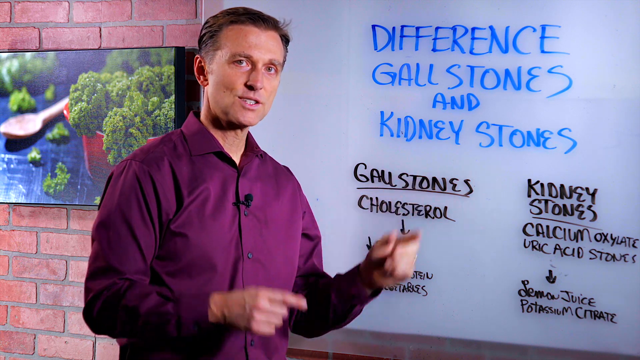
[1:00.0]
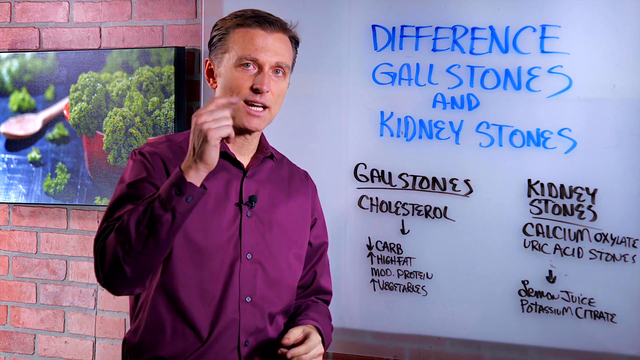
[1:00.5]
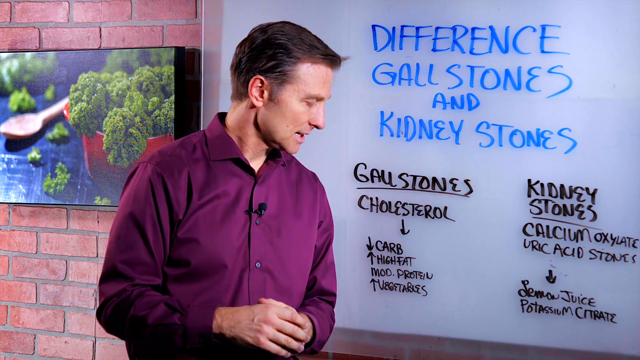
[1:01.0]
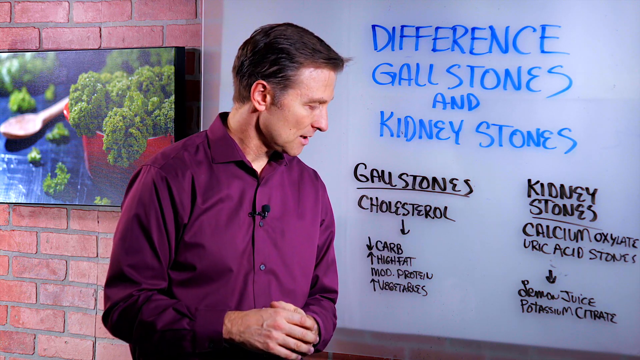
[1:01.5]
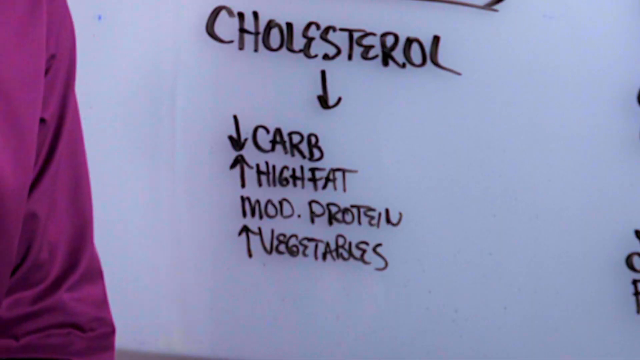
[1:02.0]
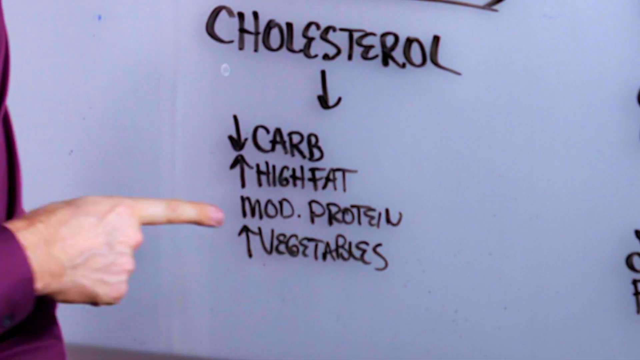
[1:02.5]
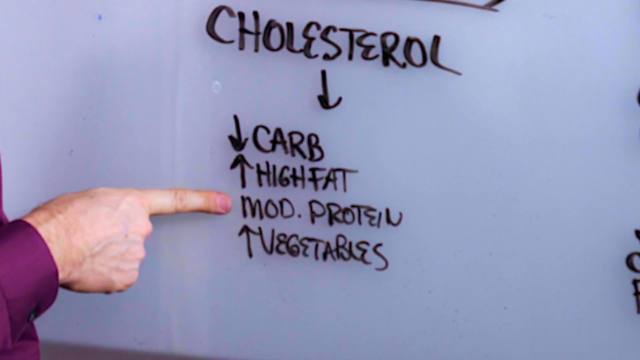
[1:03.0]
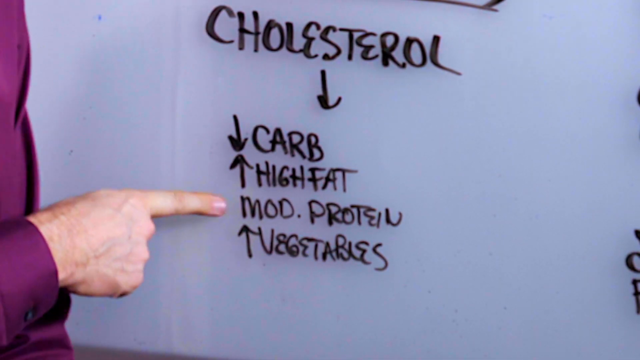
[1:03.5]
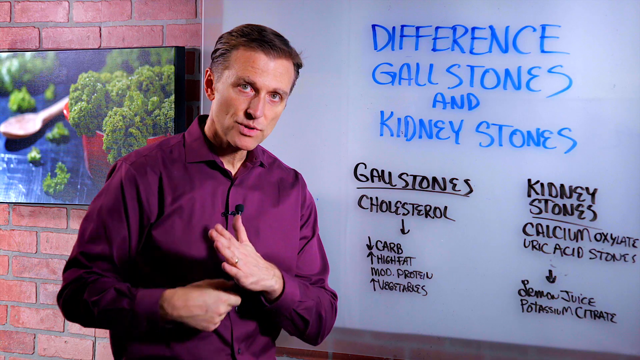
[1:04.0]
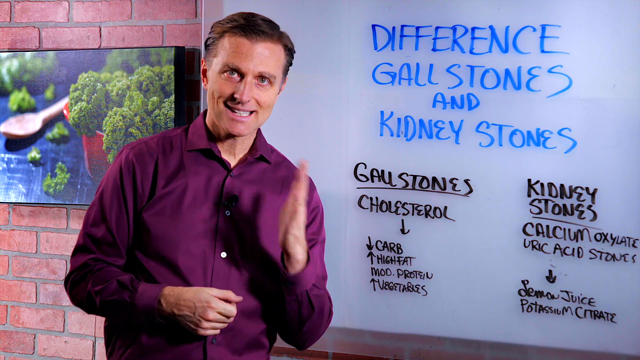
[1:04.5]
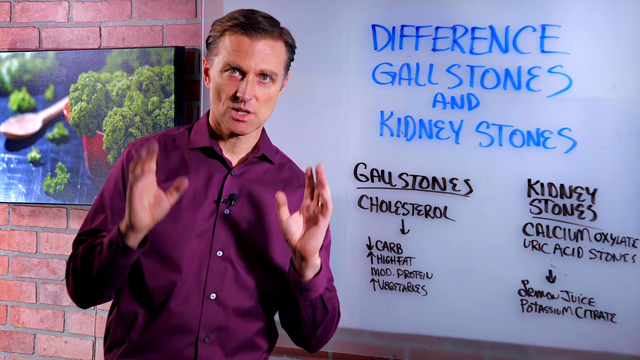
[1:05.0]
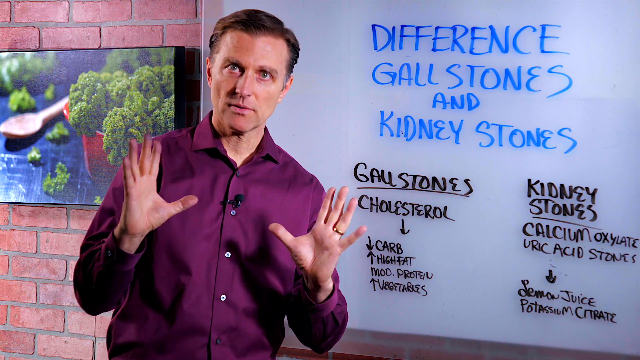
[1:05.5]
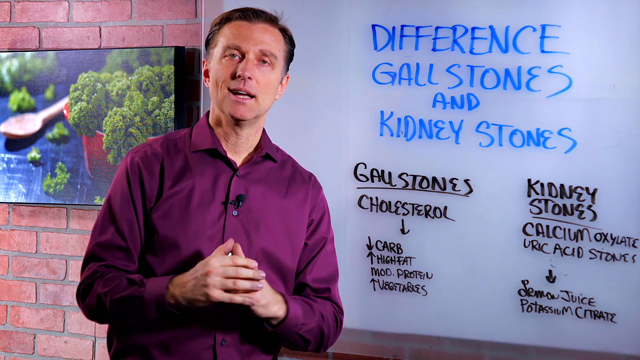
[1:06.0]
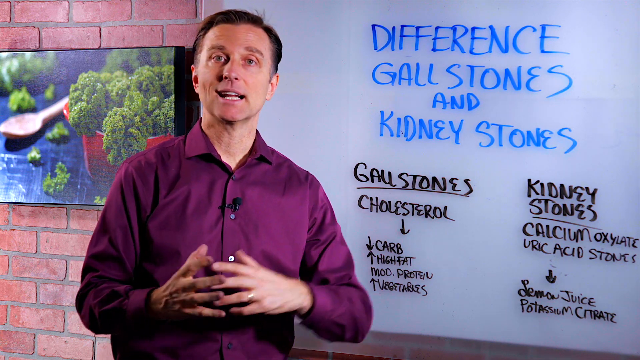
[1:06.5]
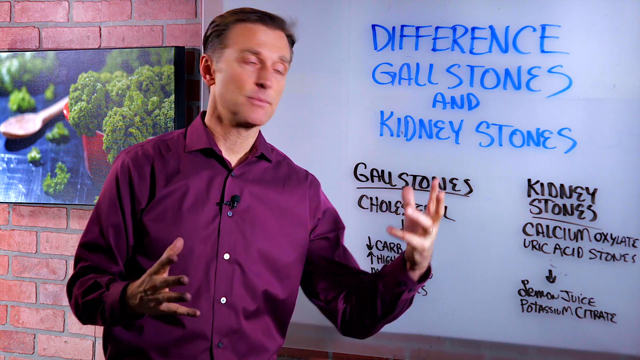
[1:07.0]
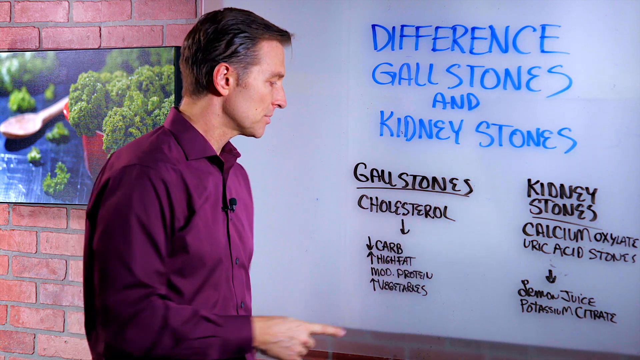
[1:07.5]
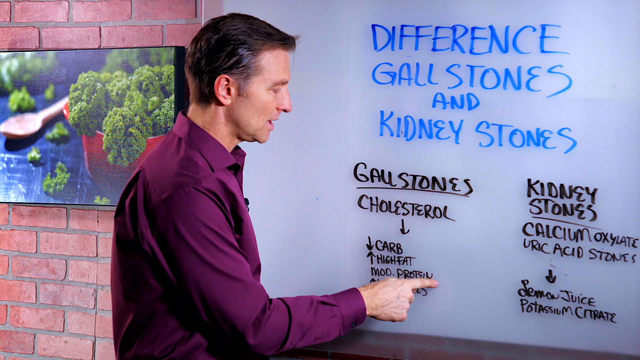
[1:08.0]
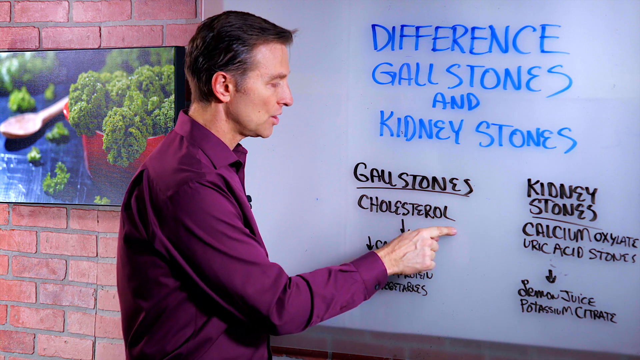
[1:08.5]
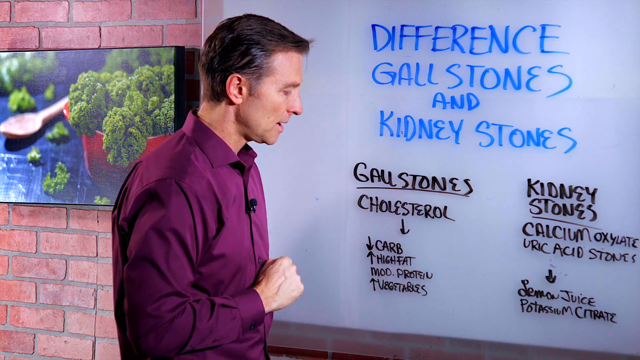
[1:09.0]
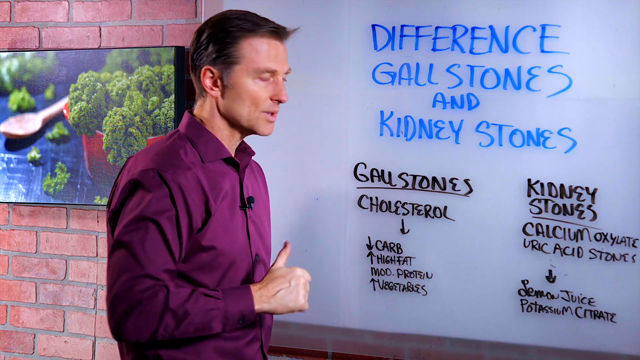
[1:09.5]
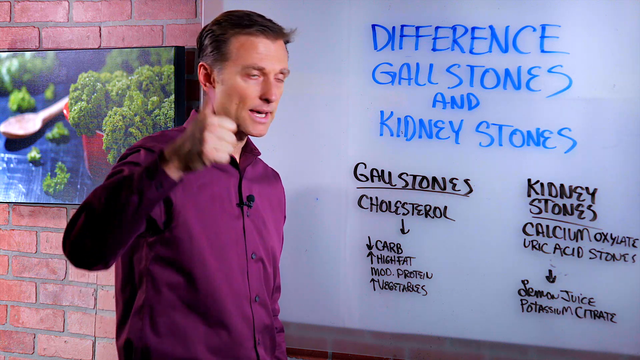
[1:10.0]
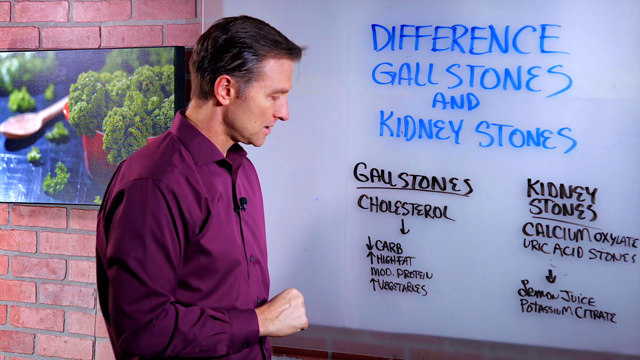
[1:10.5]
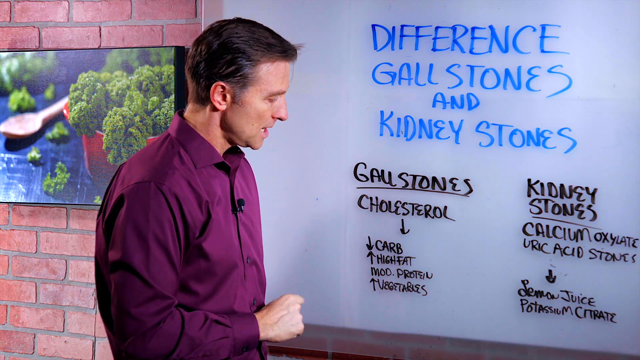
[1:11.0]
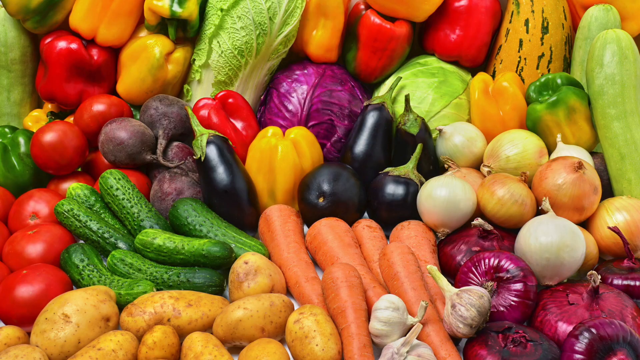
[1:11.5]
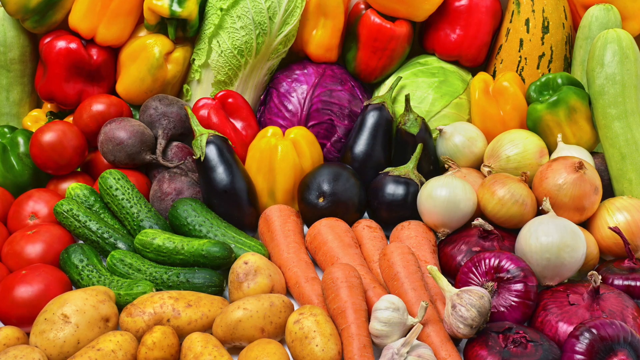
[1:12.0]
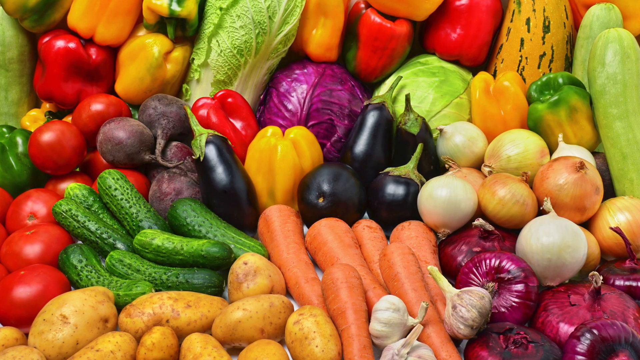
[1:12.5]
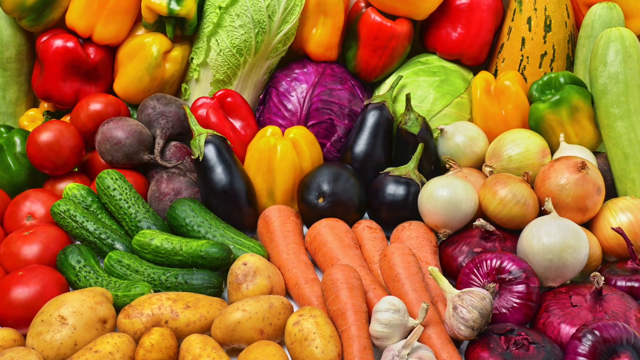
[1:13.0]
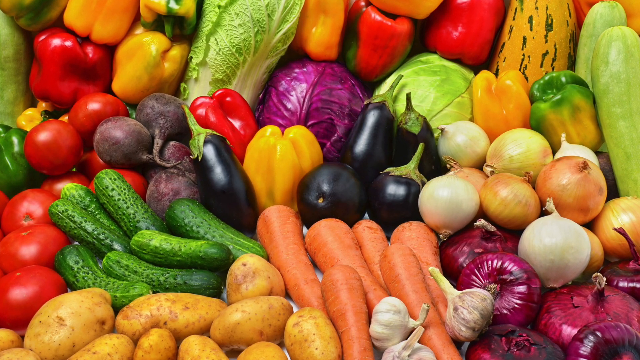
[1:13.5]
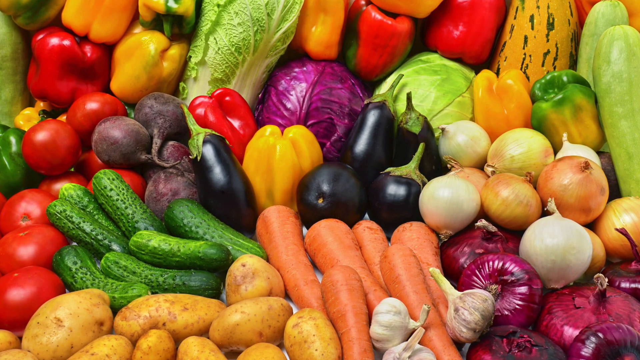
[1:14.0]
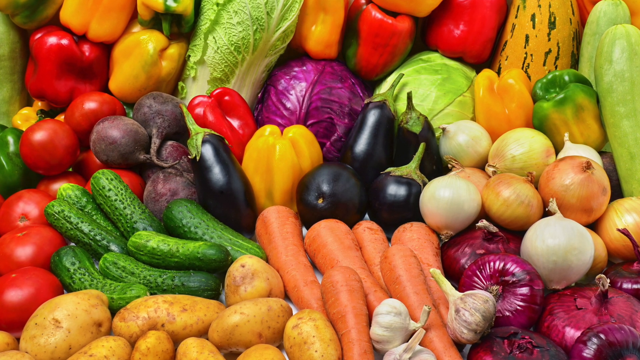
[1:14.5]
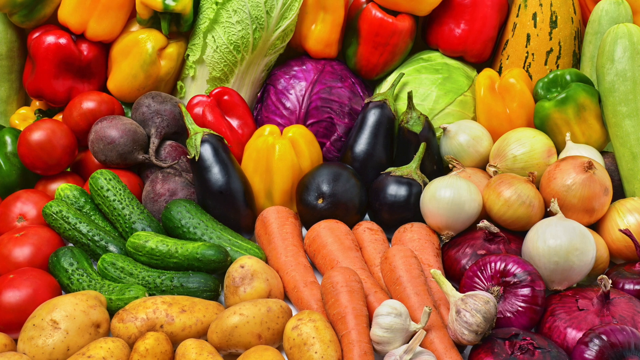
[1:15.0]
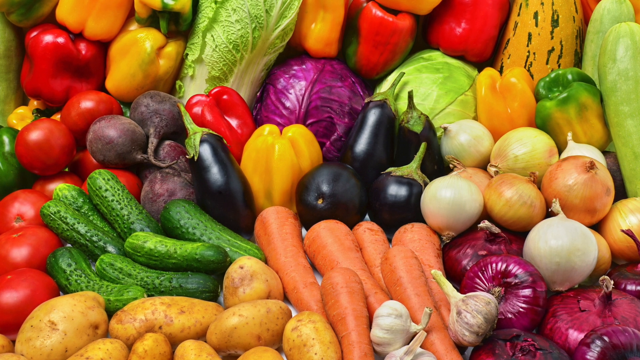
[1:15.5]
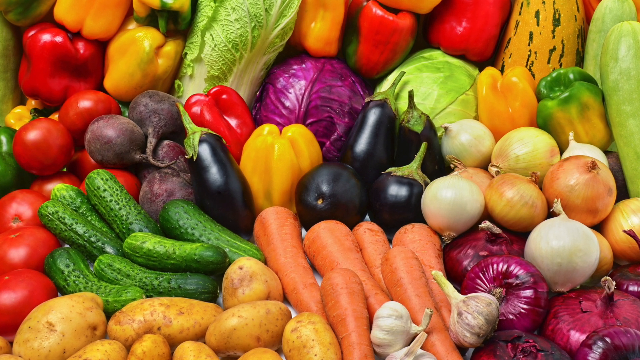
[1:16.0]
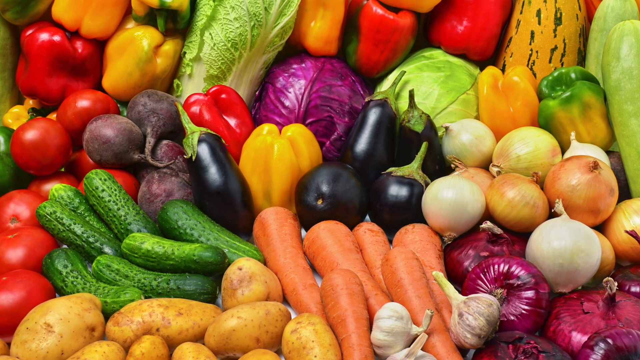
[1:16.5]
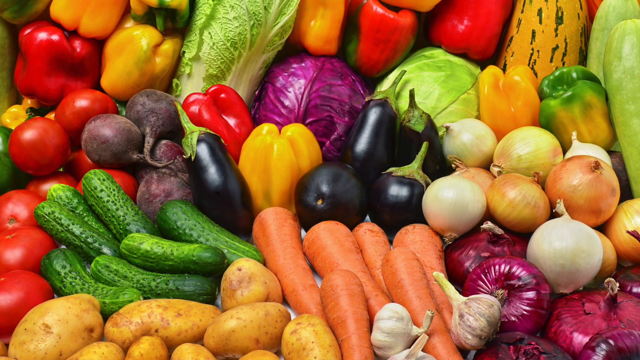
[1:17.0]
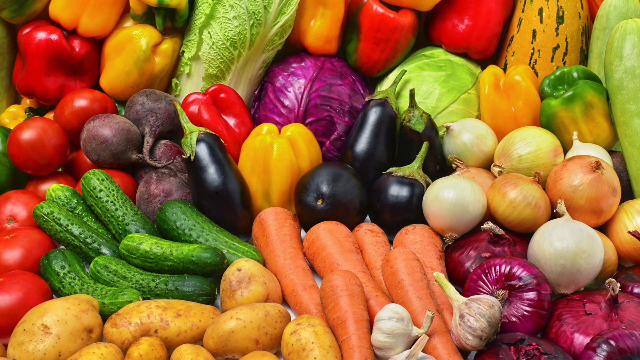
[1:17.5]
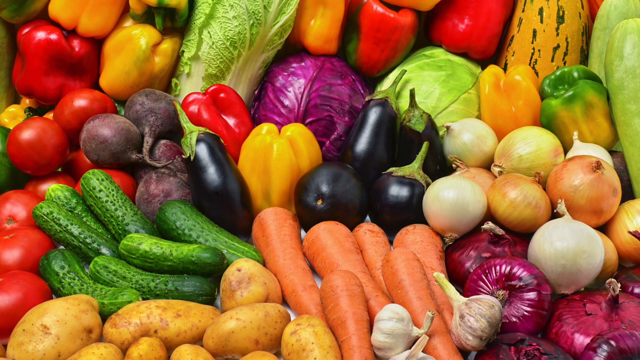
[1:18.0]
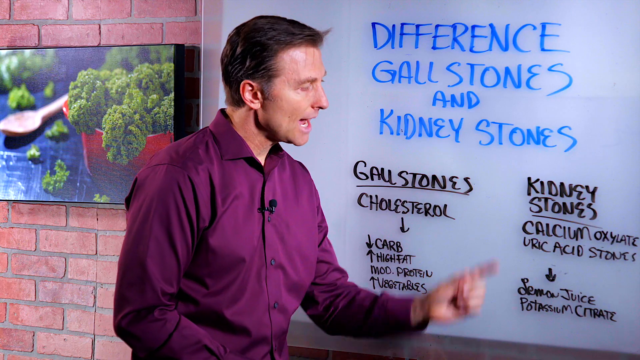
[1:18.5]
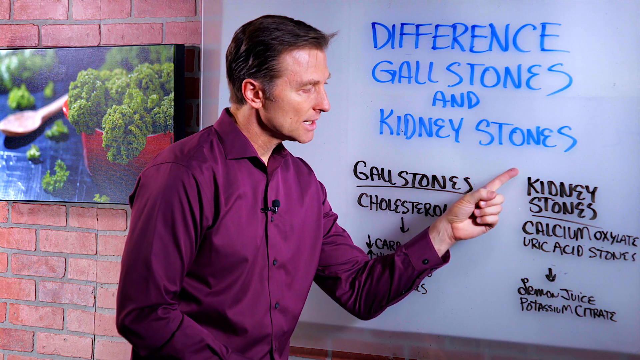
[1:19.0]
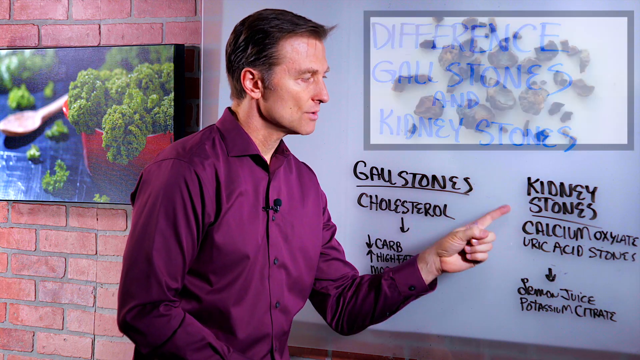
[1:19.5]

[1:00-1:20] The man continues speaking in front of the whiteboard. He points his index finger at the words written in black, "mod protein", makes some hand gestures, then points at "mod protein" and then at "gallstones". The screen changes to a still picture filled entirely with vegetables. In the bottom left corner are tomatoes, with green, red and yellow peppers above them. To the right of those is lettuce, and to the right of the lettuce are red cabbage, more peppers and some green cabbage. There is some squash in the upper right corner area, and below it are yellow, white and red onions. To the left of the red onions are carrots and garlic, and to the left of the carrots are potatoes and cucumbers. Radishes are above the cucumbers and eggplants are above the carrots. The video then returns to the man in the purple button-down collared shirt speaking in front of the whiteboard, his index finger pointed toward "kidney stones" on the whiteboard.